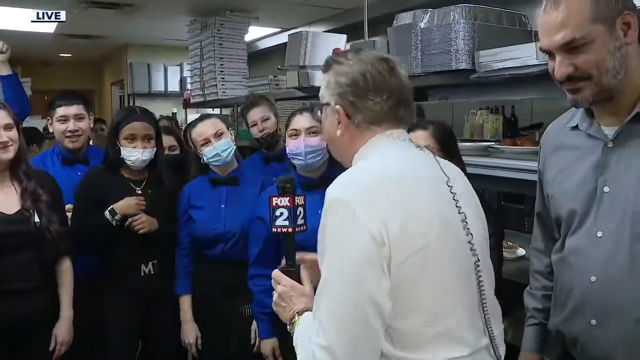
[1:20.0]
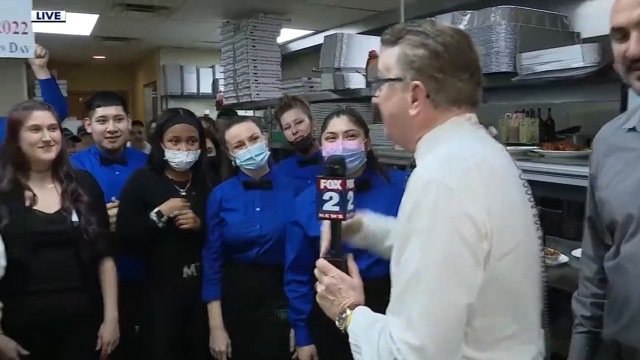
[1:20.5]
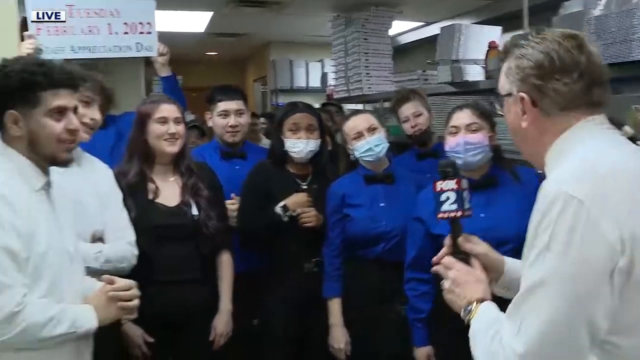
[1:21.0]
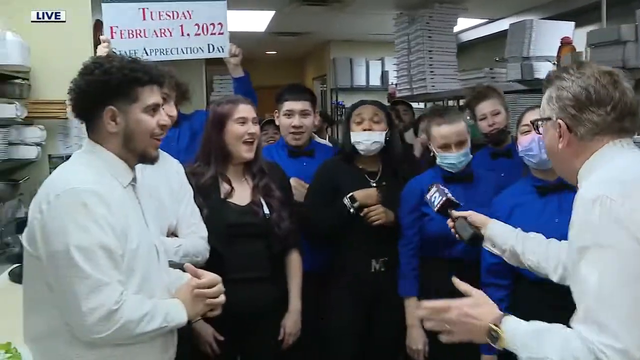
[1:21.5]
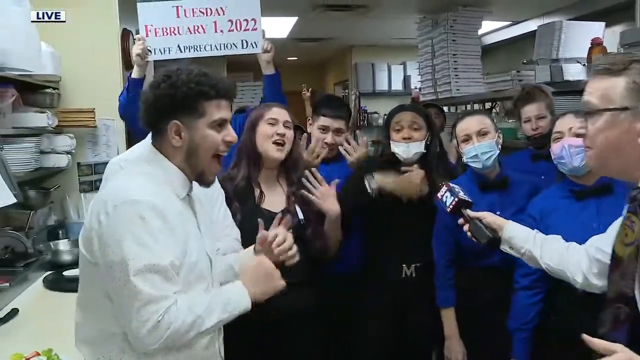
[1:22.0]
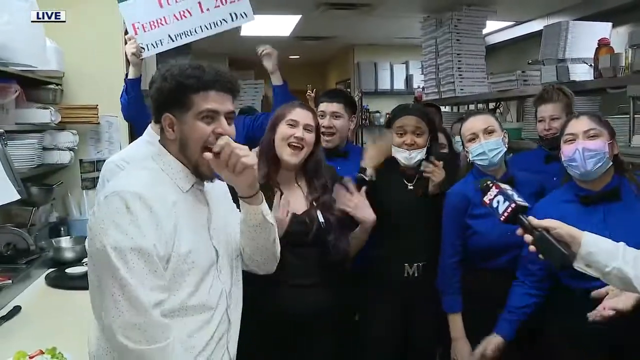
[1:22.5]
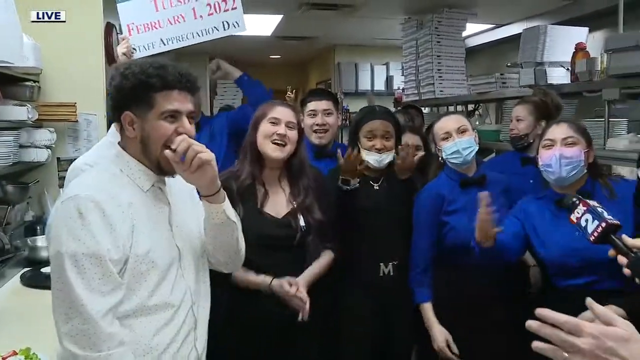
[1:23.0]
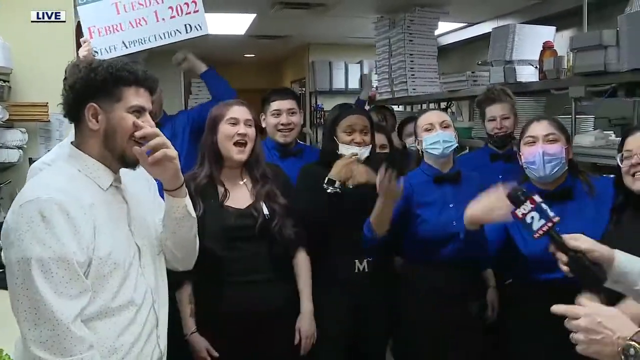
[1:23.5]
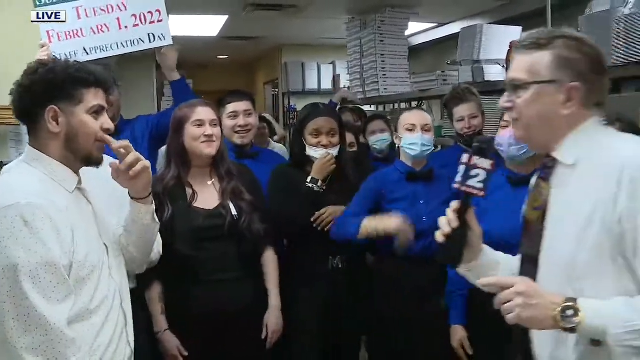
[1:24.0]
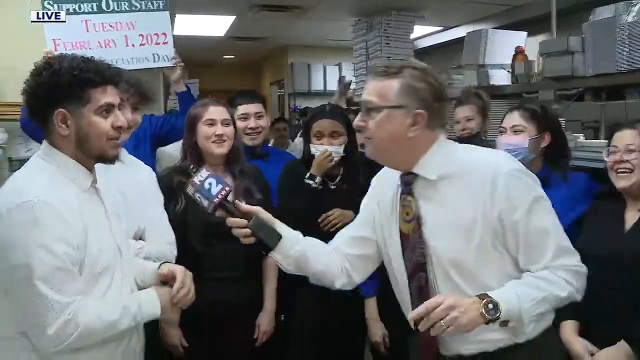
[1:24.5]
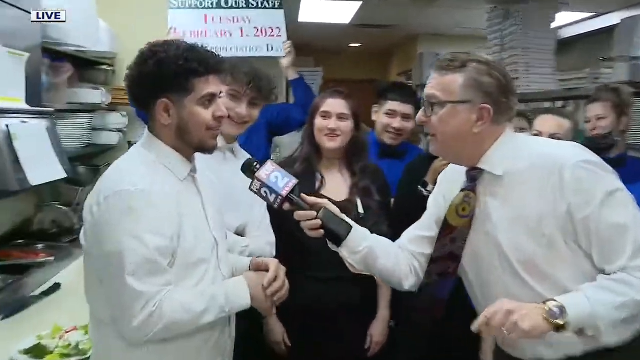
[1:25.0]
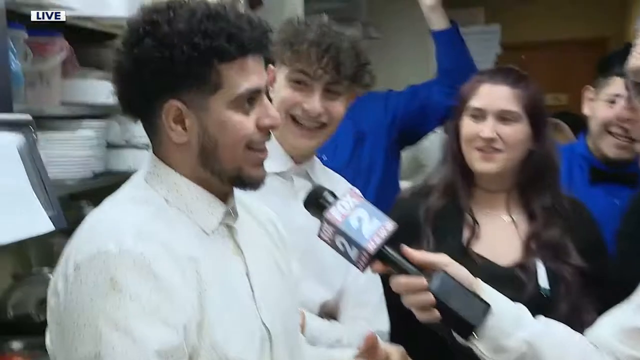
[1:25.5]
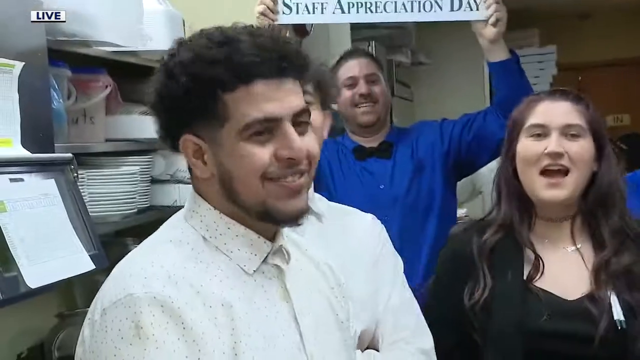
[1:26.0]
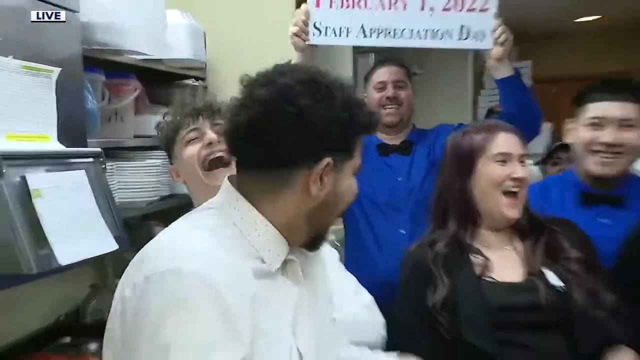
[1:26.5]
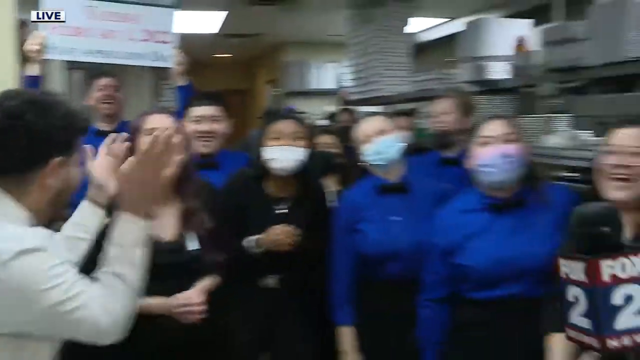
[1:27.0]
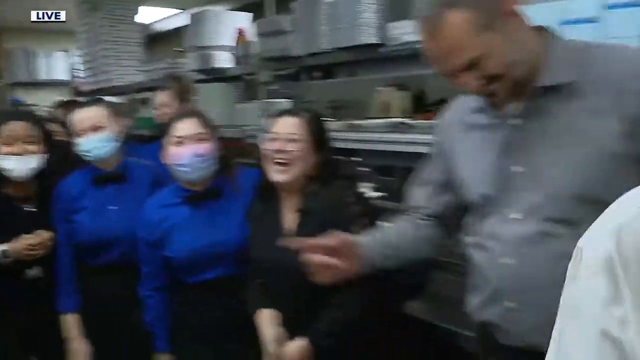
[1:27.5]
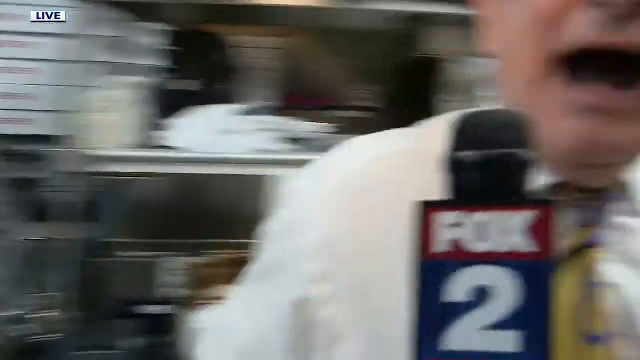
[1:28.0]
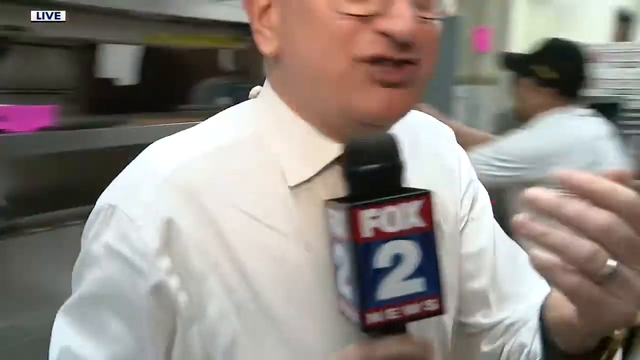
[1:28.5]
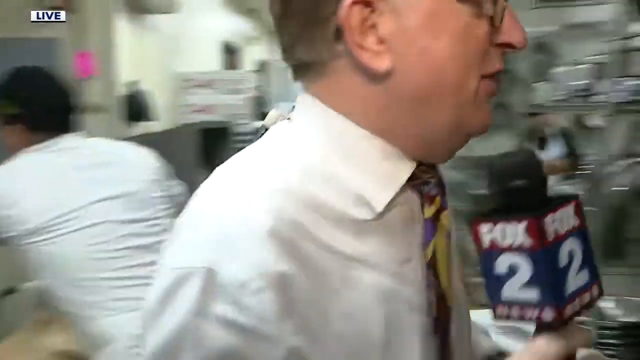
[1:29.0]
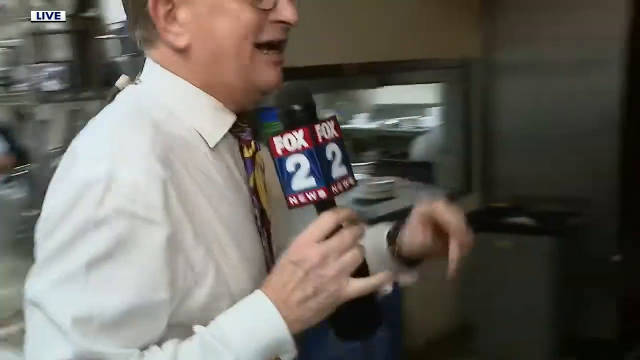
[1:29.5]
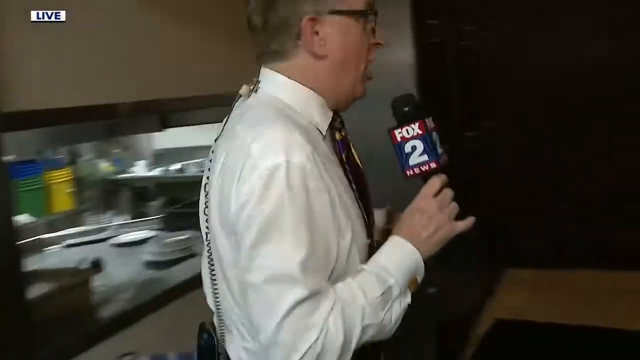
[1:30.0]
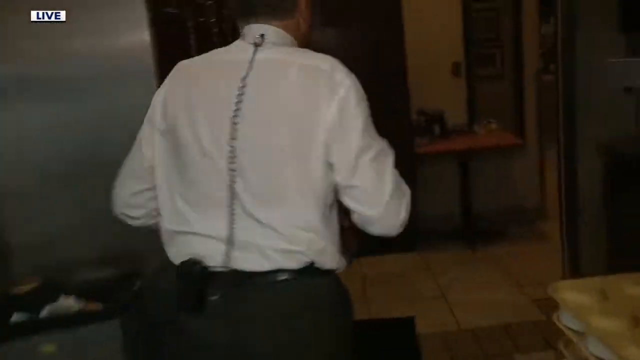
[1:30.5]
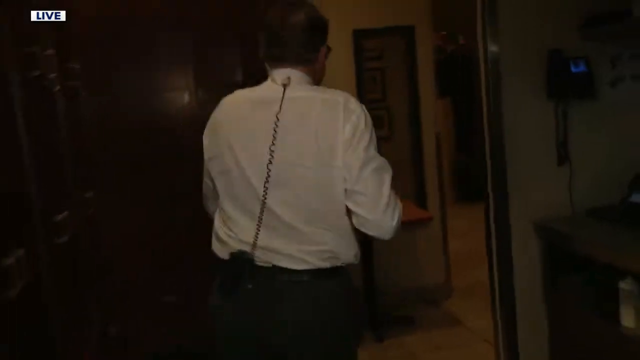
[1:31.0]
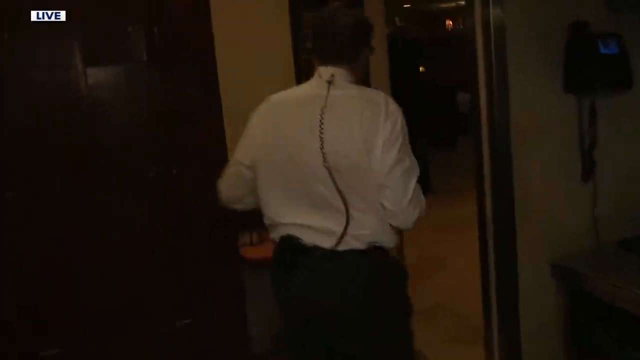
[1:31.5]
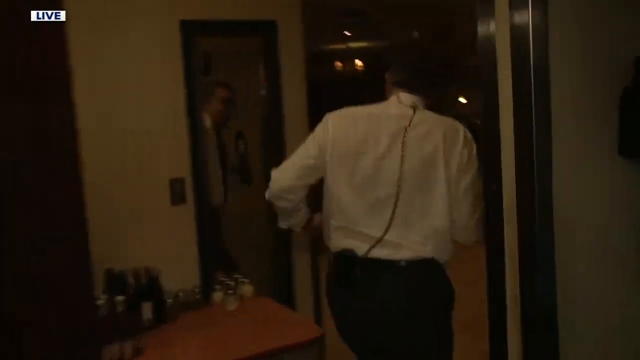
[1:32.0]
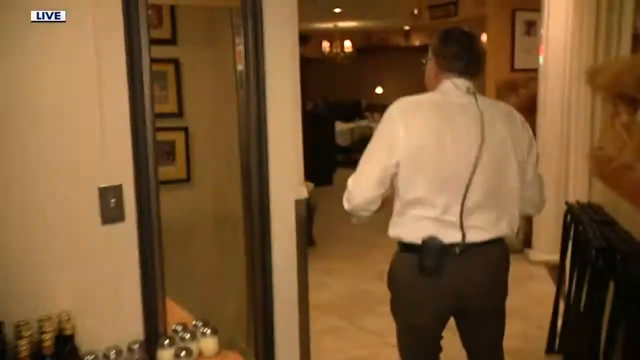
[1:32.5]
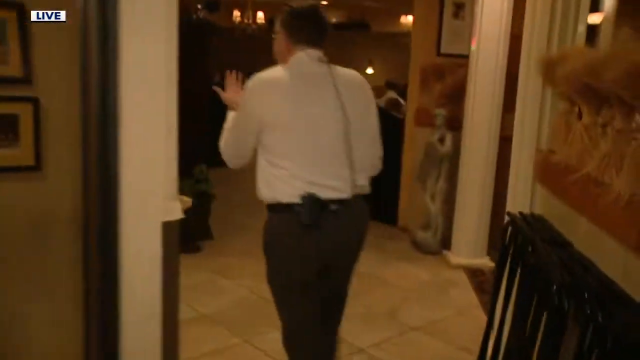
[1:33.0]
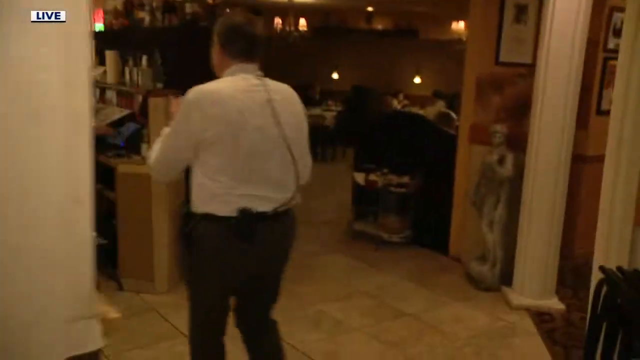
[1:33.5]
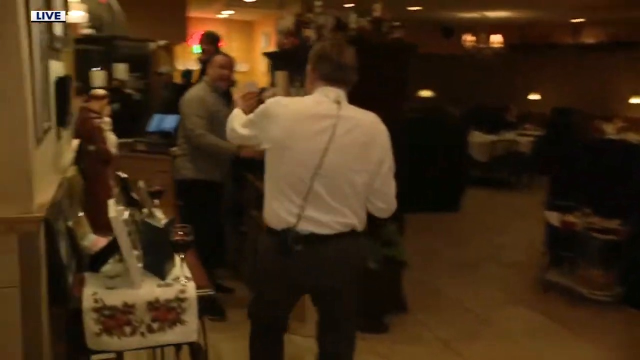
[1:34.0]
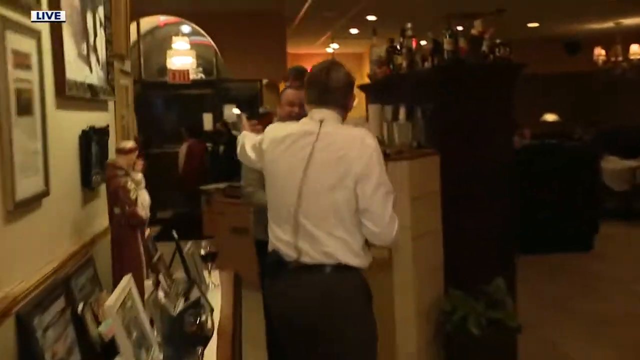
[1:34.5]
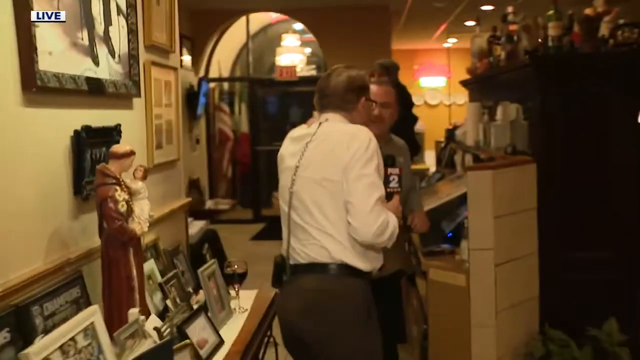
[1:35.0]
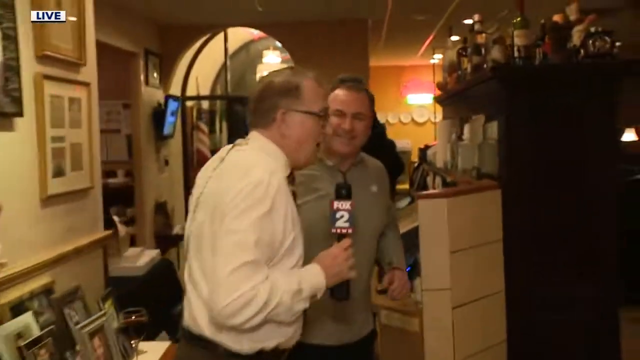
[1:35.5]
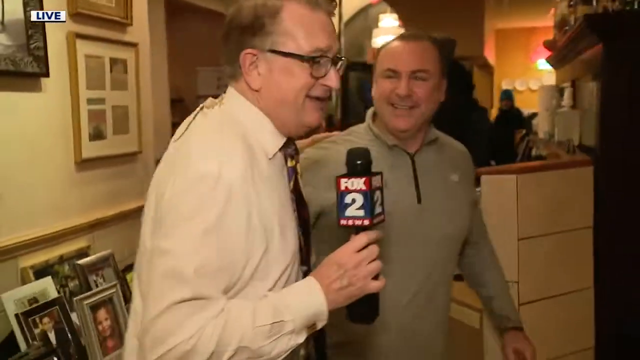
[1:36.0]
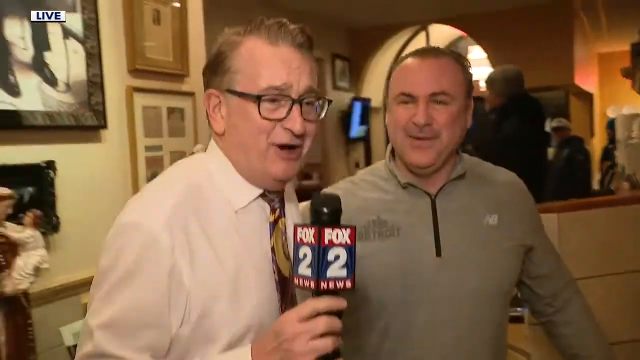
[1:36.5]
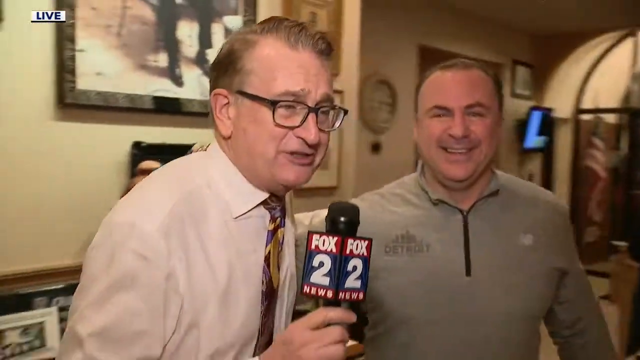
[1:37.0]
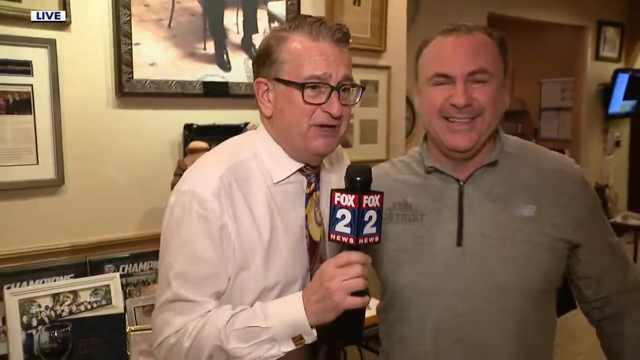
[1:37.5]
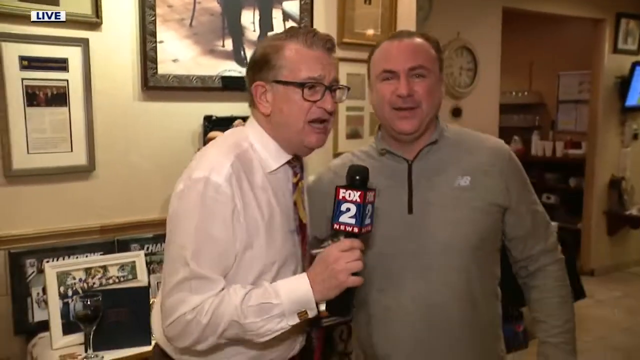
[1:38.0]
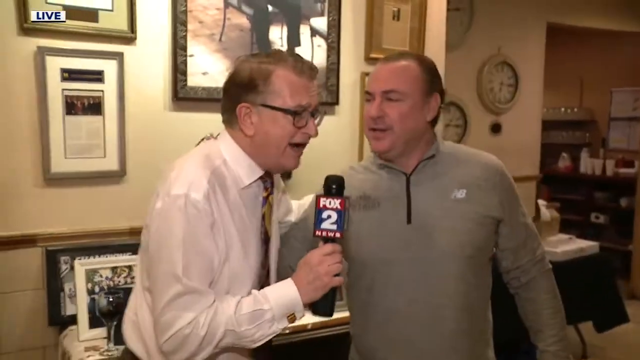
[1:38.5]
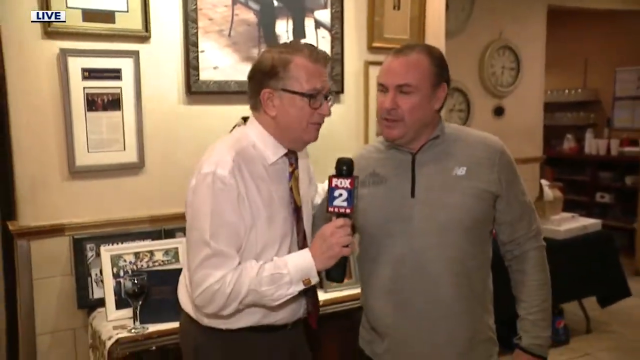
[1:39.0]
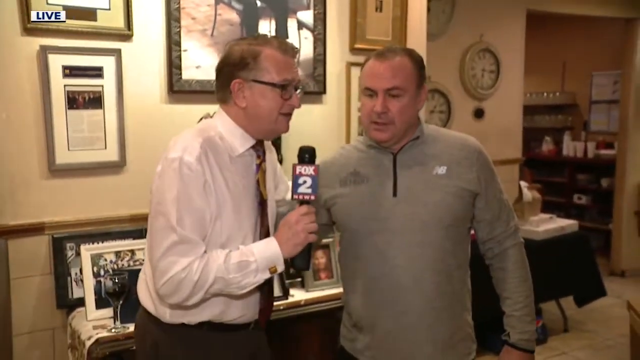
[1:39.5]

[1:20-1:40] The reporter is super energized and excited, and the staff are attentive to his comments. As he points the microphone at them, the chef leads in and everybody claps and cheers, looking really thrilled. The chef continues to answer something, and then everybody starts laughing. Still talking, the reporter scampers back out into the main part of the restaurant and comes to the hostess stand. He puts his left arm around either the manager or the owner, who is older, with a kind of receding hairline and short hair that is a little black and a little salt-and-pepper, and a gray shirt. In the background is a large framed picture, and the bottom of someone's pants and shoes are visible. As the reporter asks him something, the owner nods, getting ready to answer.